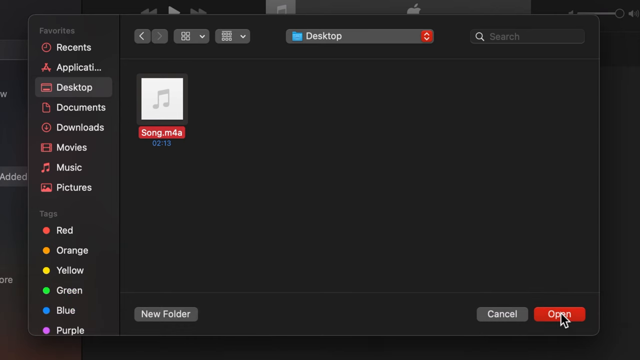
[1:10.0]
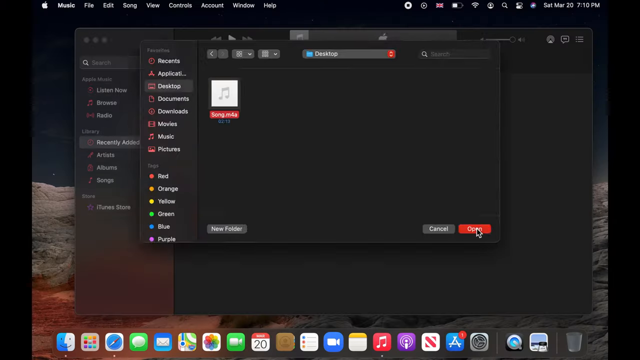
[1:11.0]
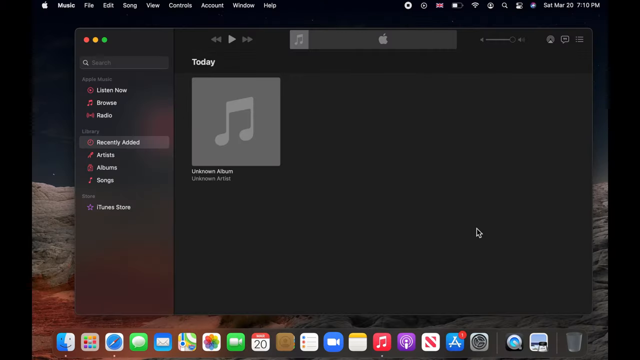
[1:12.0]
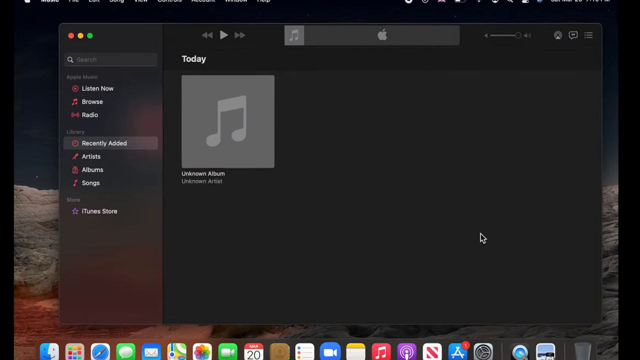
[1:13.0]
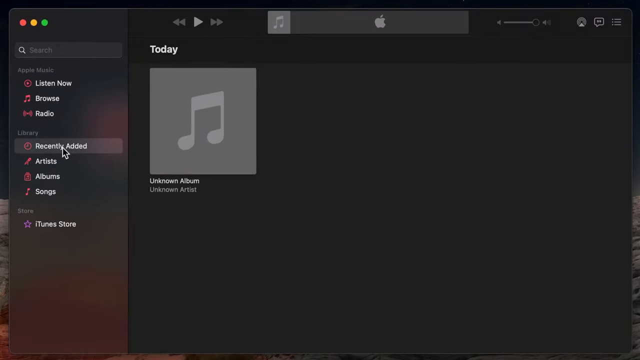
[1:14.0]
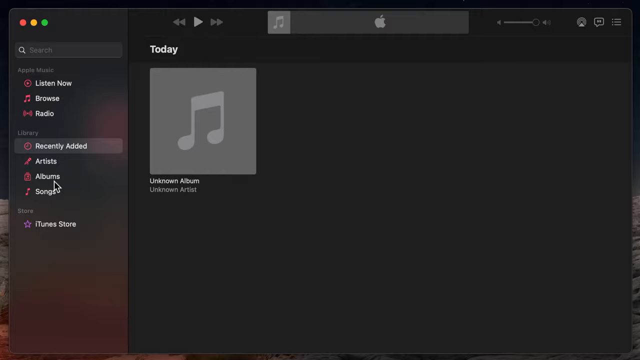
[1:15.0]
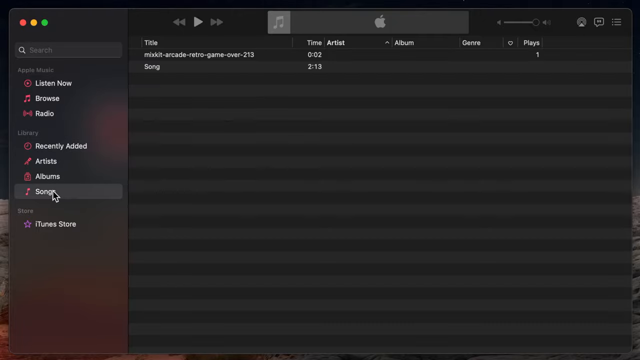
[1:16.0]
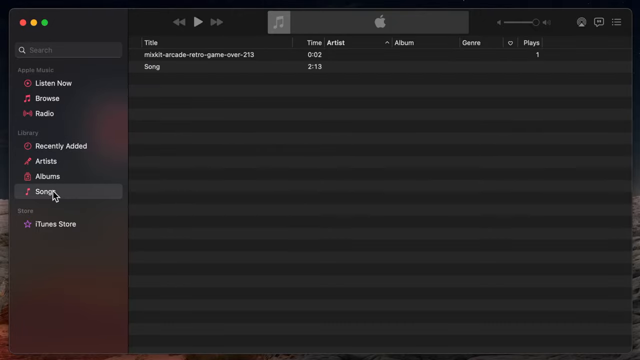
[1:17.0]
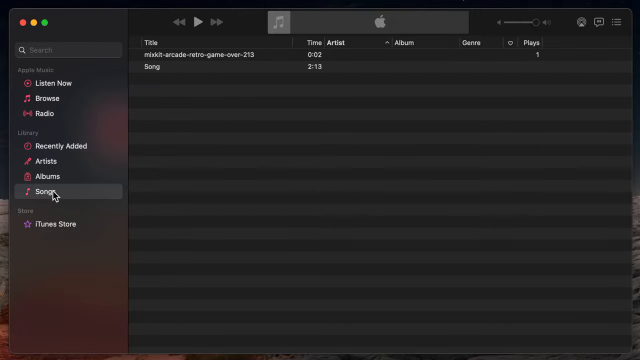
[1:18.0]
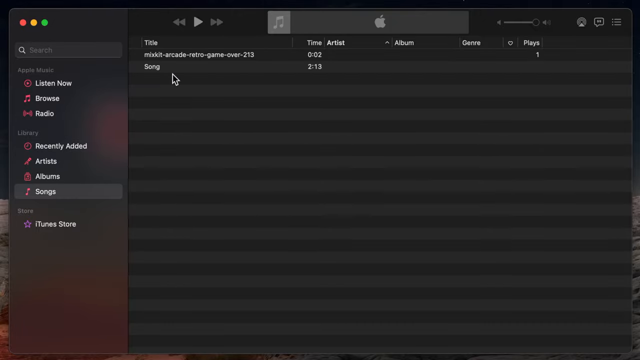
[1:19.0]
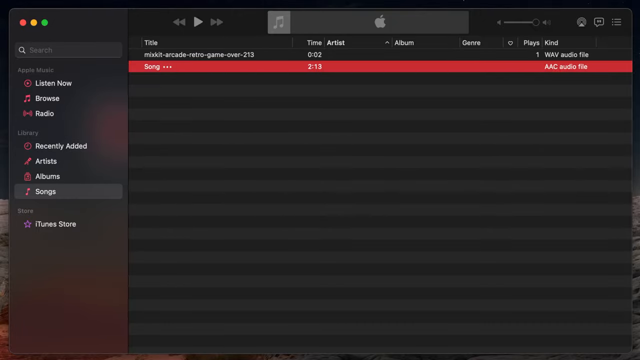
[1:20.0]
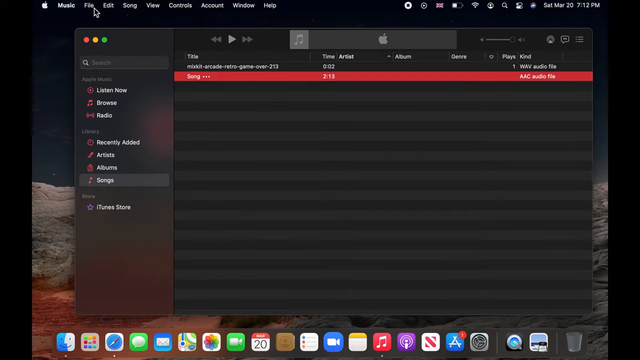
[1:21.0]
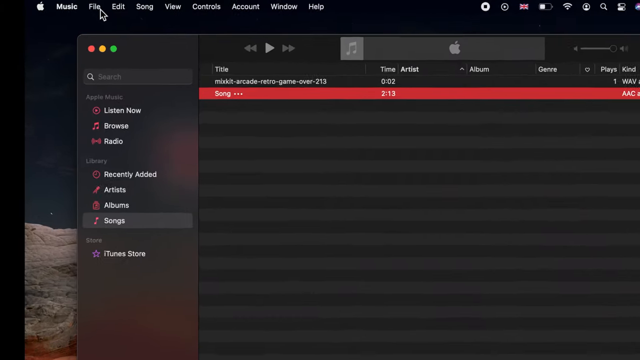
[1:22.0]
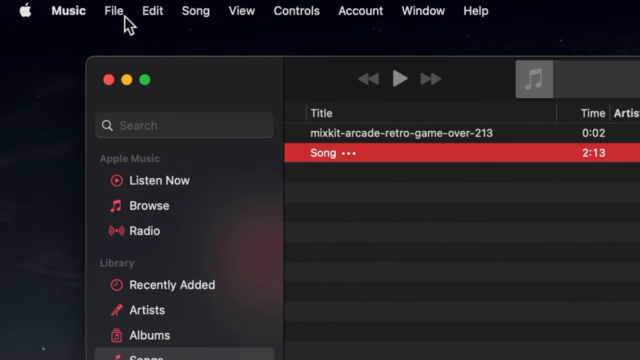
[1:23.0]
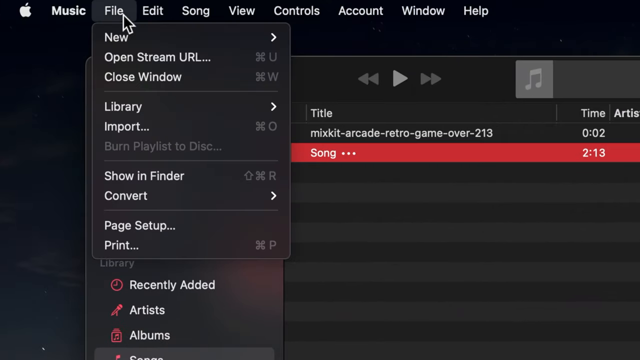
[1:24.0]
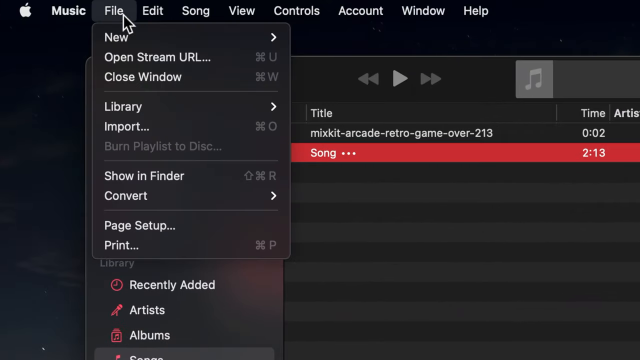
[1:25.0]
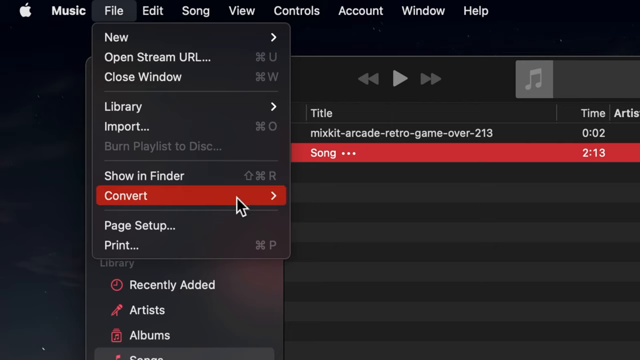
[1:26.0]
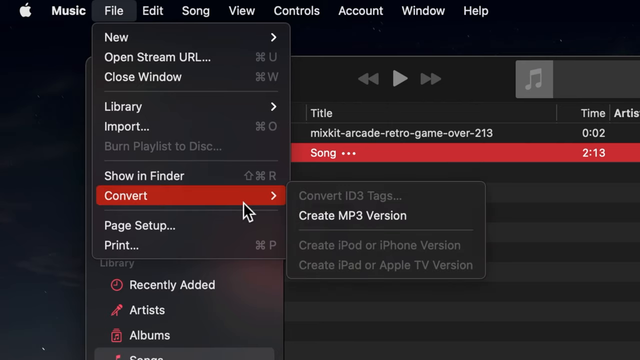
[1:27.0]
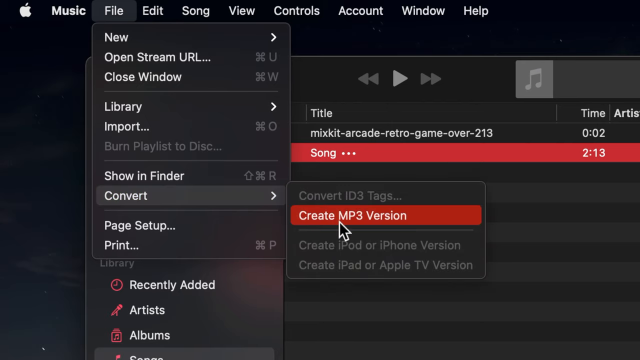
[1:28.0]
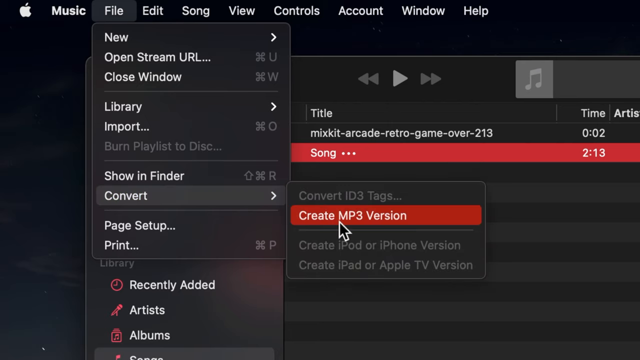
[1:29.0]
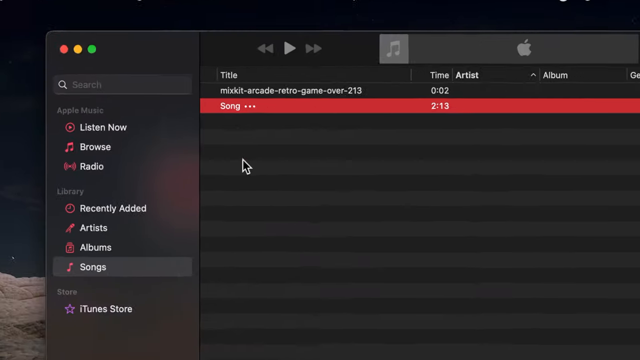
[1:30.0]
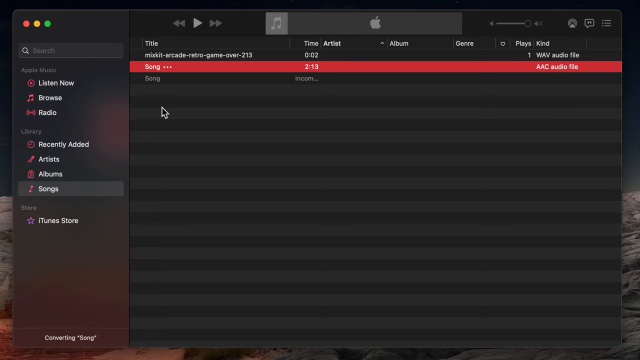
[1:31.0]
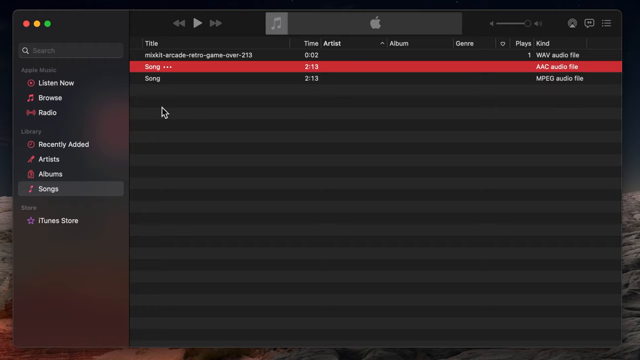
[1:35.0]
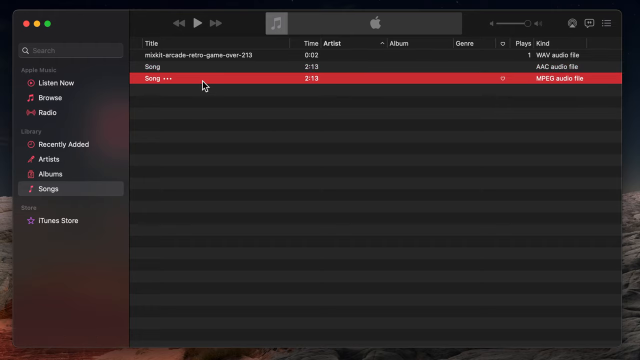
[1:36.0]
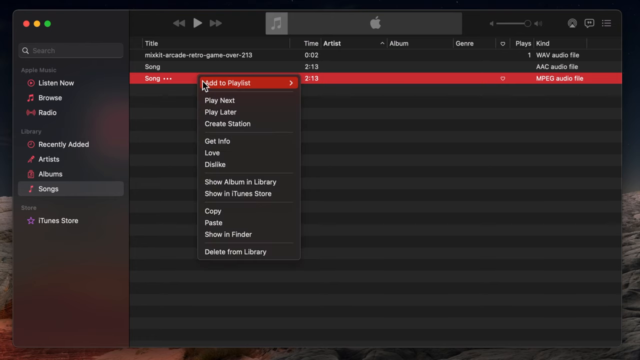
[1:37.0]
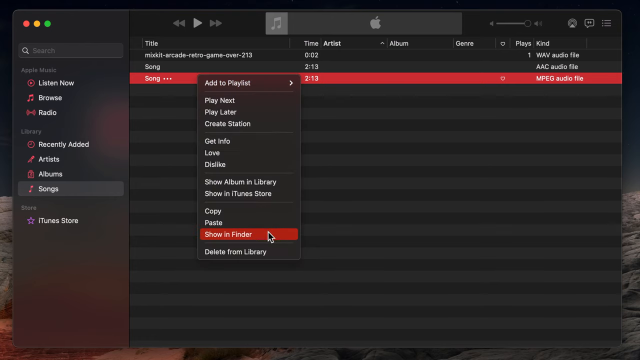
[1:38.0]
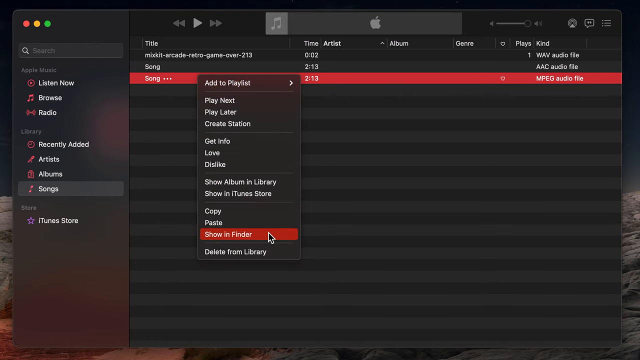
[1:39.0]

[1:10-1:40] In the Music app, the user goes to the left section listing Library, recently added, artists, albums and songs. He chooses songs, which shows two song files: Mixkit-Arcade-Retro-Game-Over and the new one, titled Song. He selects Song, opens the File menu again, goes to Convert and clicks an option that says "convert to mp3." After a few seconds, a copy of the song appears below it as a different file type, mpeg instead of the original aac. The user right-clicks the new copy and clicks "Show in Finder," and the video cuts.